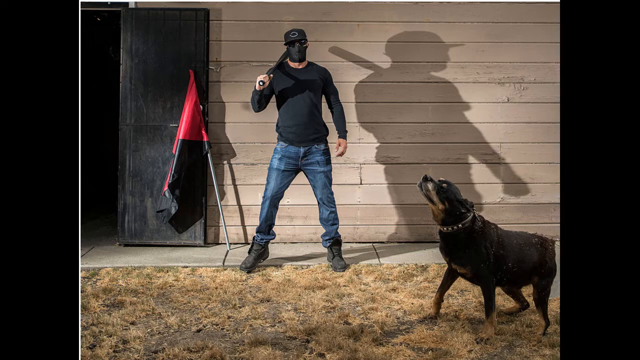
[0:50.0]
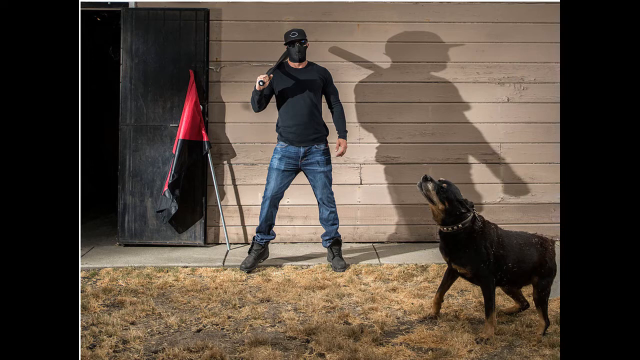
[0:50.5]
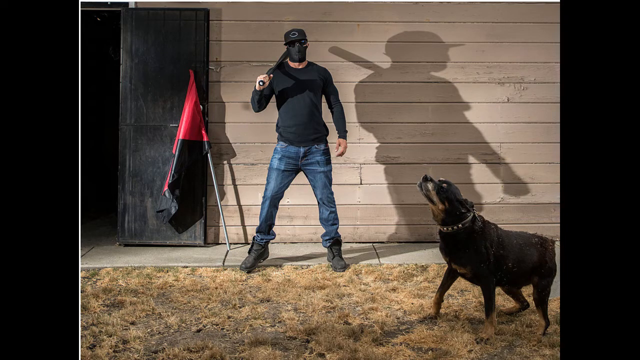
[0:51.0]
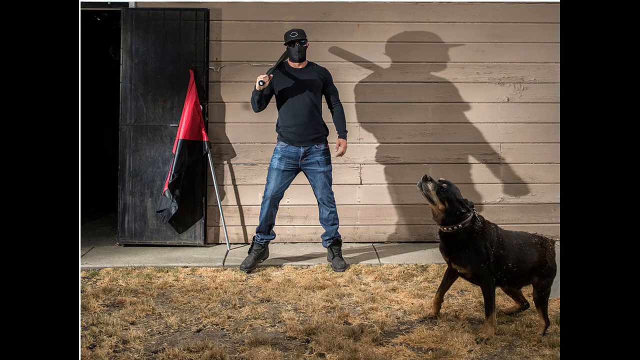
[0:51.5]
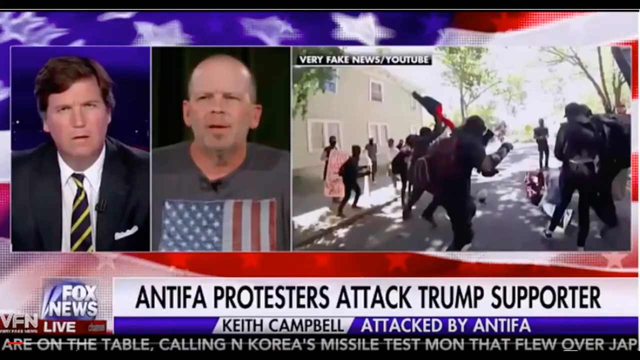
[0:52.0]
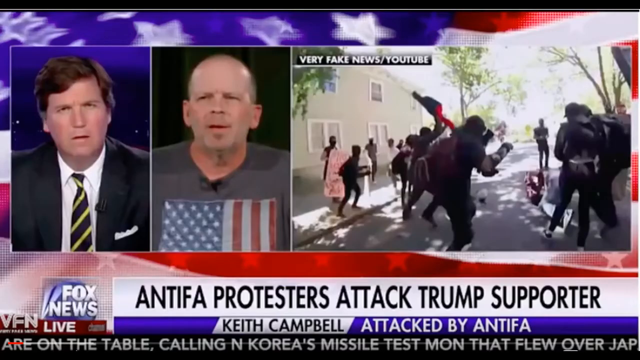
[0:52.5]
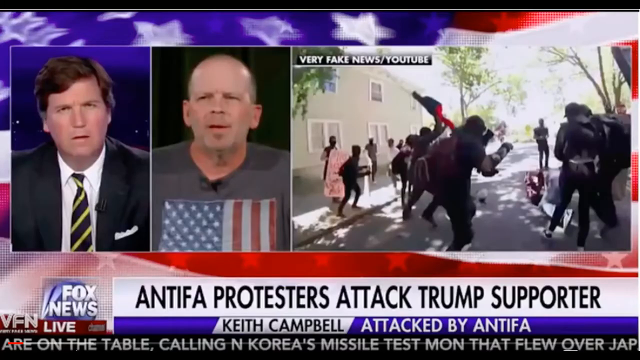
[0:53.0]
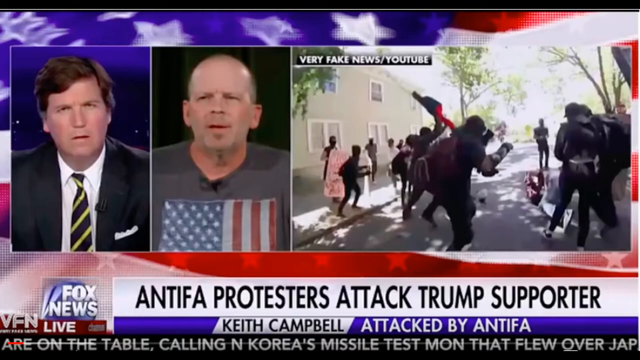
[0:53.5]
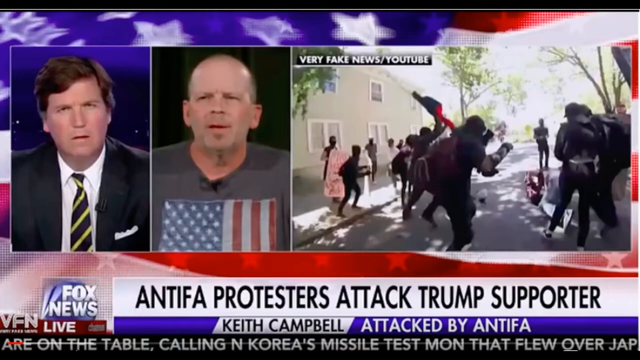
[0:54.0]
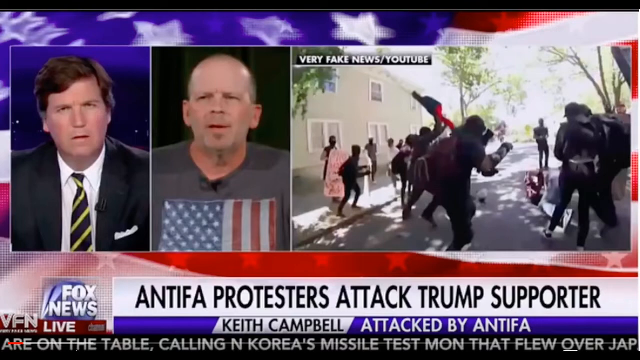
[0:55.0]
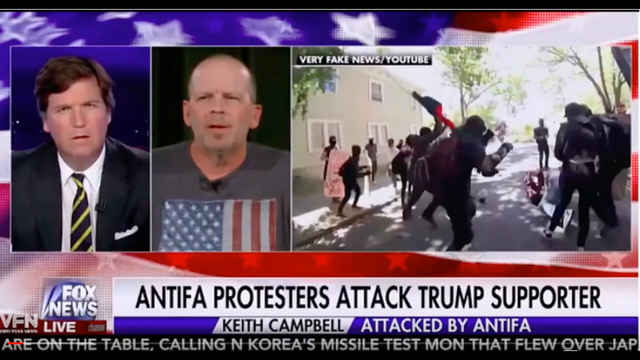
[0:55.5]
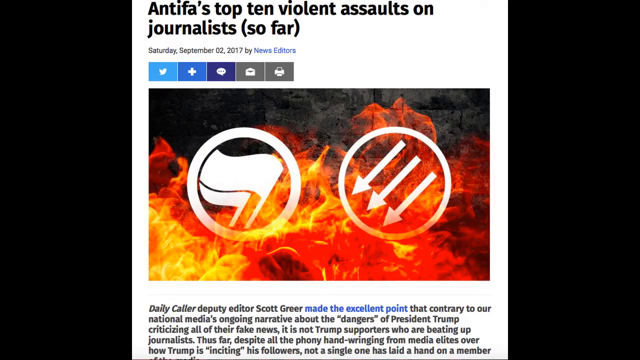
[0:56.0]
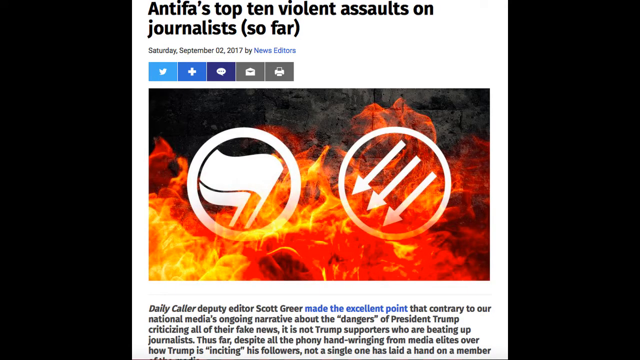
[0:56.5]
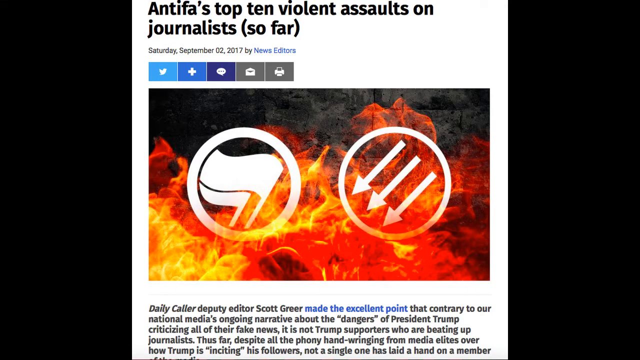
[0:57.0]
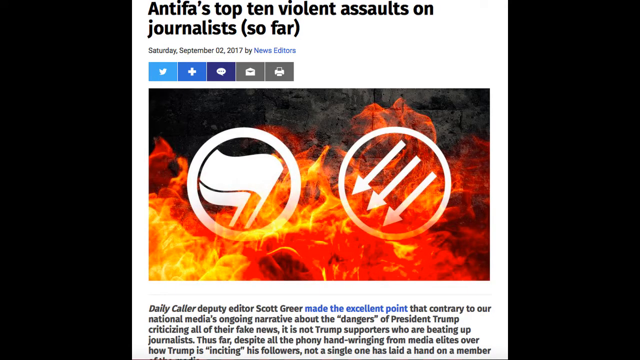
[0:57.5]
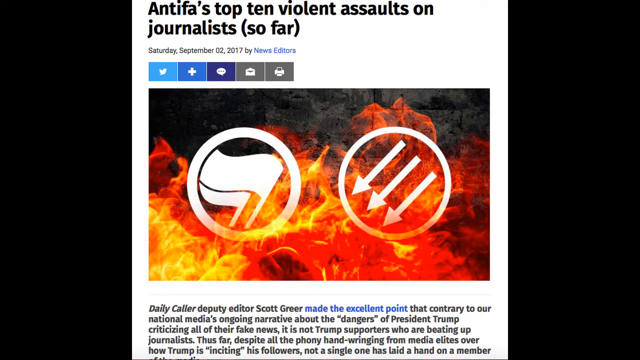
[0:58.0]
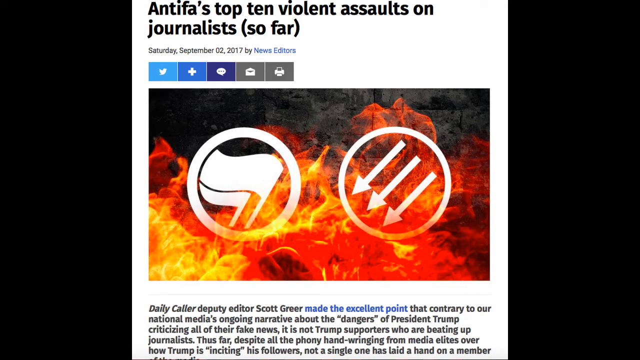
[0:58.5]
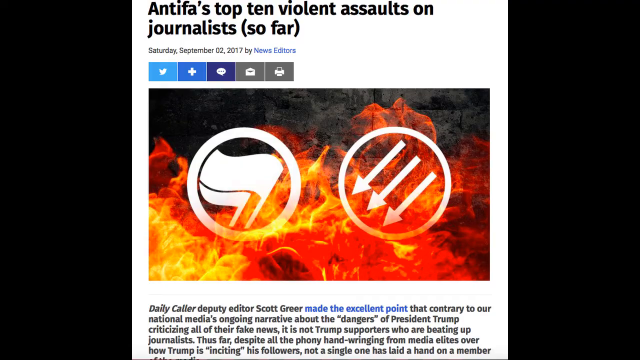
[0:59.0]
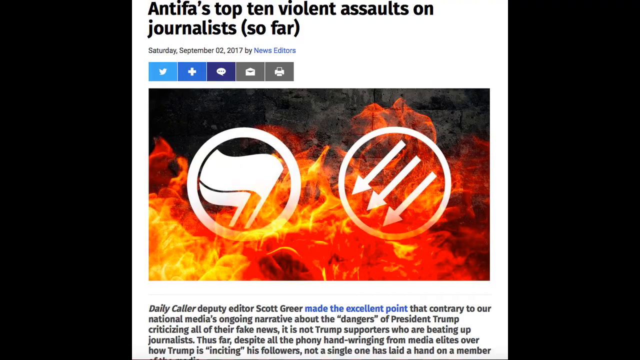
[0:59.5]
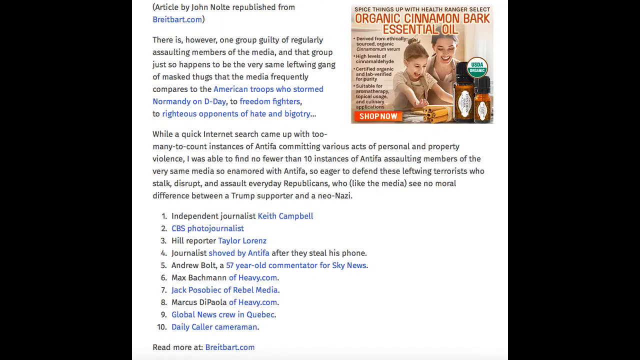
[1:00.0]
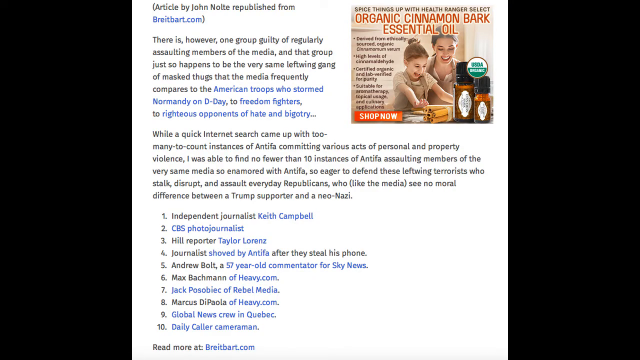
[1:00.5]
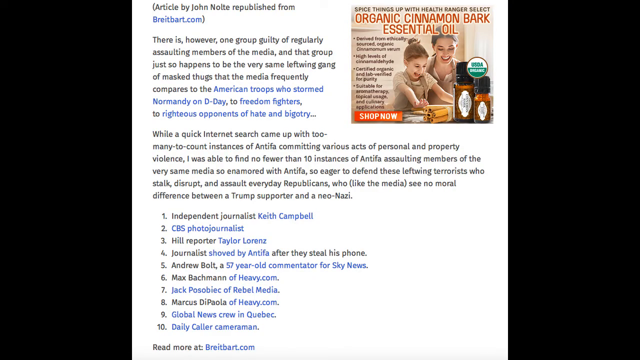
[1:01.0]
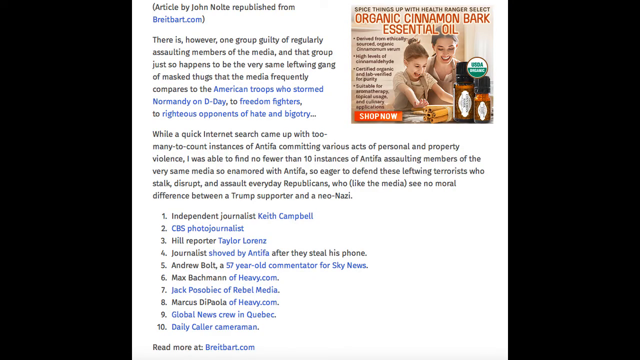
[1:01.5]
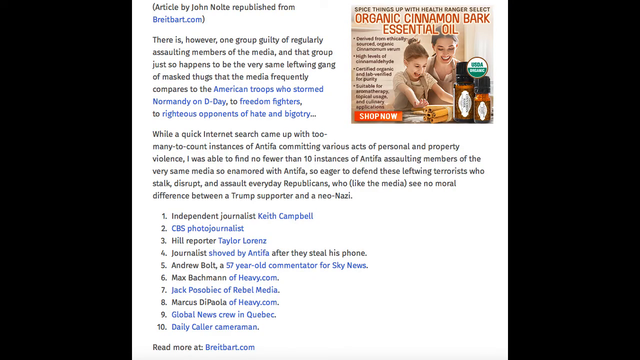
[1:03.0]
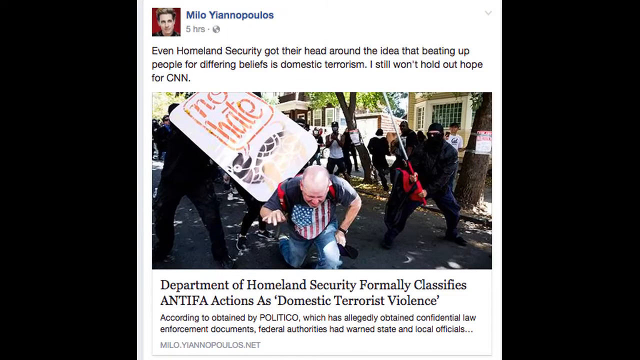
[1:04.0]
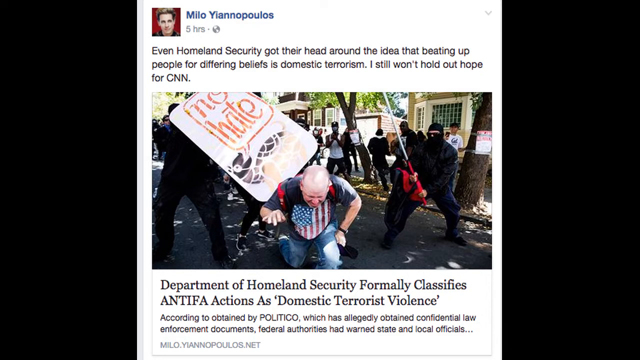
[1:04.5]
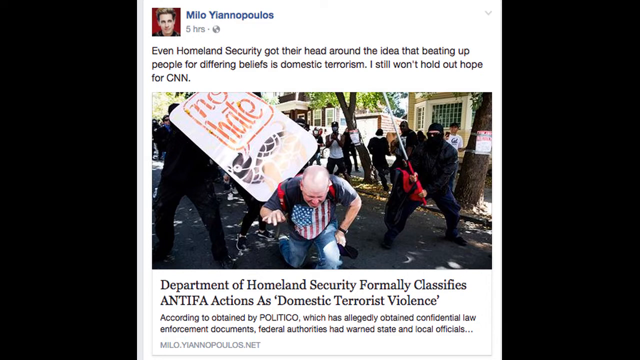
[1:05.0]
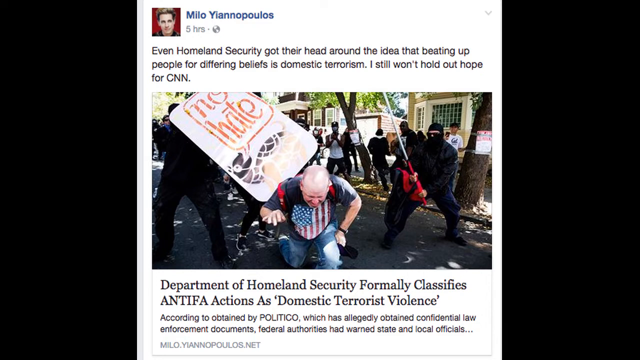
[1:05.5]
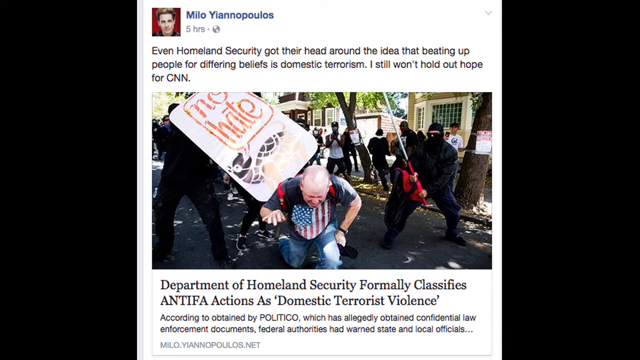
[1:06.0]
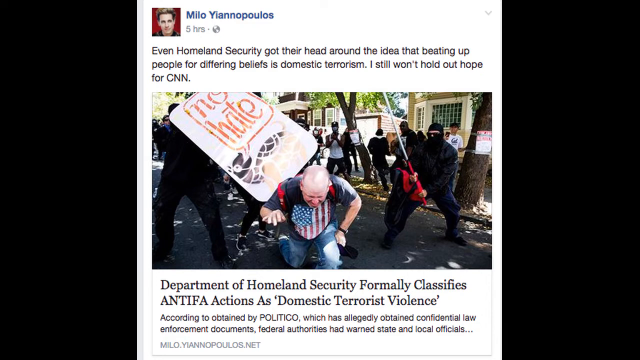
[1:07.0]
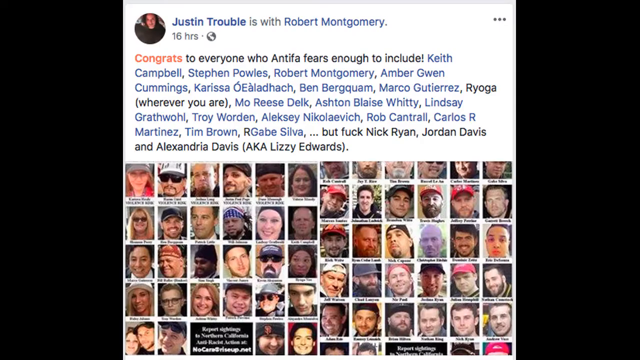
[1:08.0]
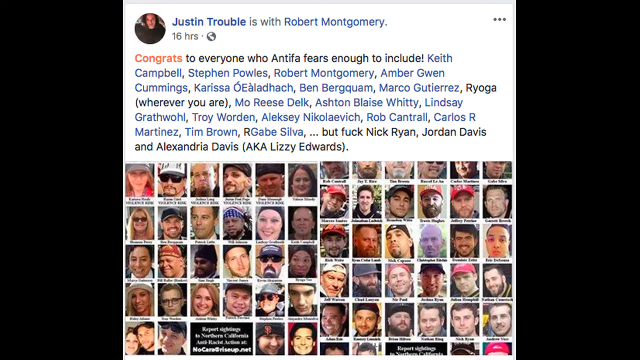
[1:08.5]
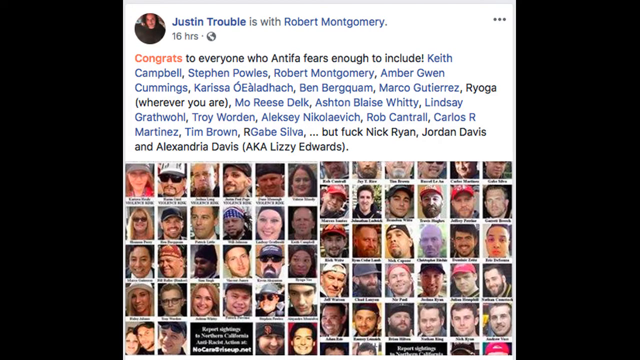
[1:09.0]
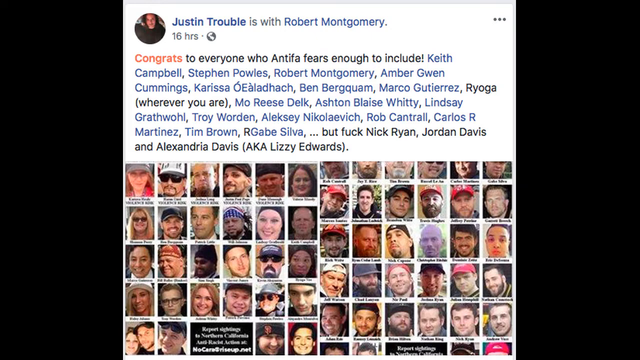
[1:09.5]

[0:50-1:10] A fair use disclaimer appears on a navy blue background, with the copyright laws of the United States written in a small white and yellow font. The patriotic warrior media logo follows, with a black person holding something that looks like a binocular, in white, red and blue. Next is the Proud Boys media logo in a yellow and black theme, then the patriotic warrior podcast, with a person holding hands. A man stands in front of a cream wall with a black door behind him. He carries a black stick on his arm and wears a black cap, a black mask, a long-sleeved black T-shirt, blue jeans and black boots; he seems very strong and is white. A dog stands in front of him, looking upwards; it has a chain on its neck, is black with a little brown, and stands on dry grass. A red and black flag is at the man's side, and his shadow is on the wall. The scene seems very brightly lit. News footage follows with two men: one wears a T-shirt with a patriotic flag, and the other, who seems to be a news anchor, wears a black suit, a white shirt and a striped tie. On the right side is news from the street, where people seem to be running around. Next is news with a fire and the headline "Antifa's top 10 Violent Assaults on Journalists so far", which seems to be a screenshot from a social media platform, along with an ad for organic cinnamon bag essential oil. More news follows, seemingly a social media post that includes pictures.